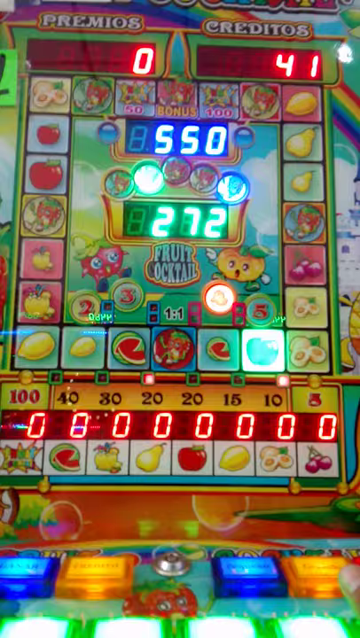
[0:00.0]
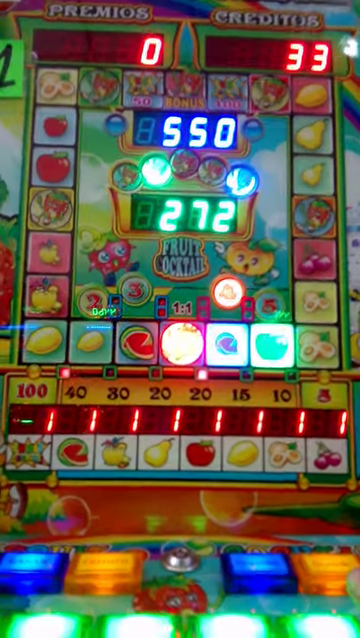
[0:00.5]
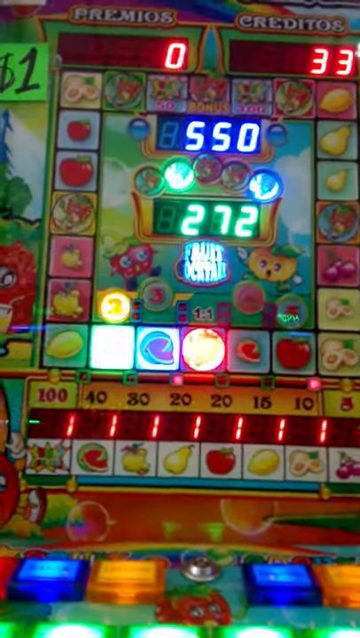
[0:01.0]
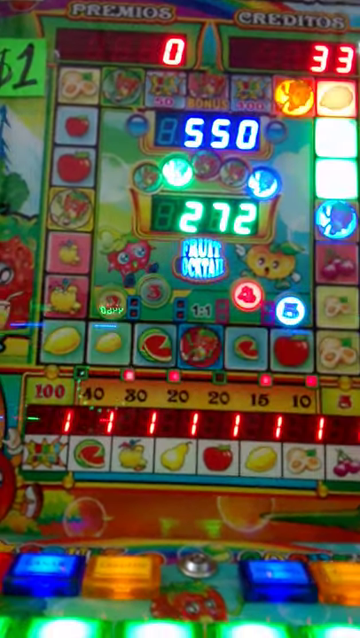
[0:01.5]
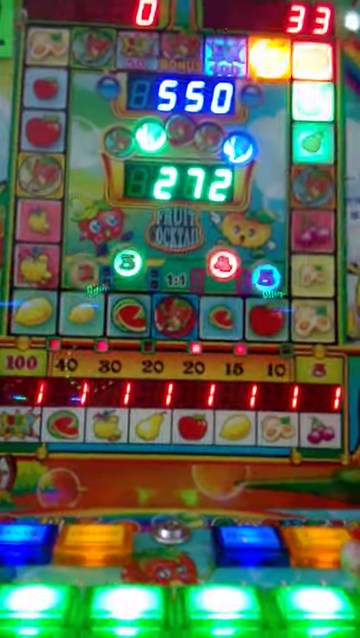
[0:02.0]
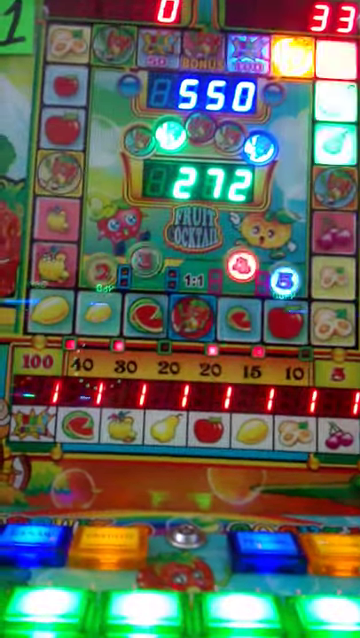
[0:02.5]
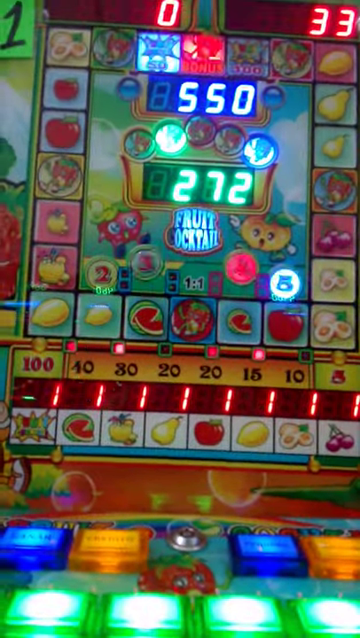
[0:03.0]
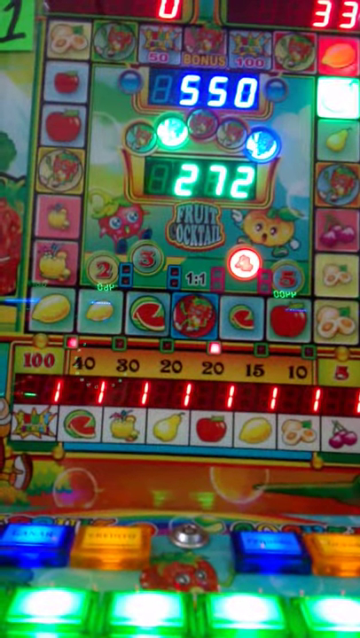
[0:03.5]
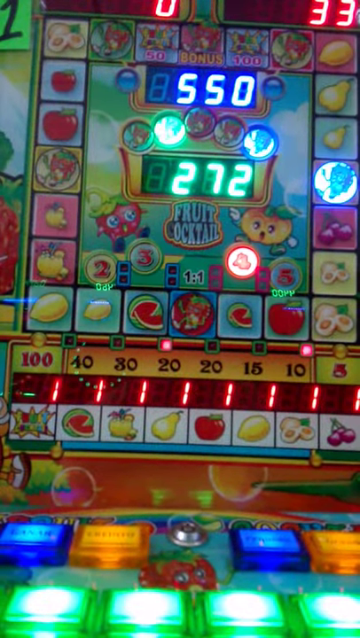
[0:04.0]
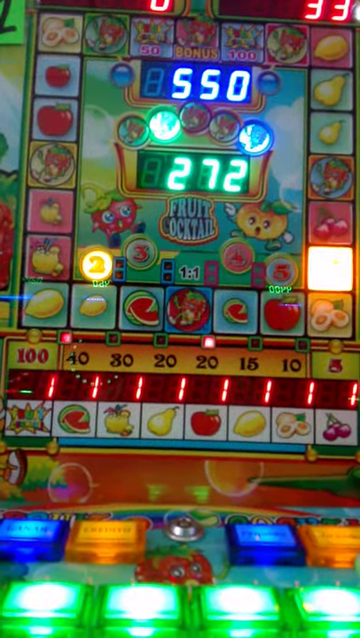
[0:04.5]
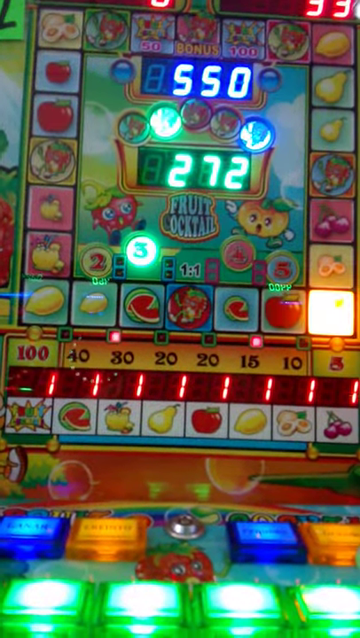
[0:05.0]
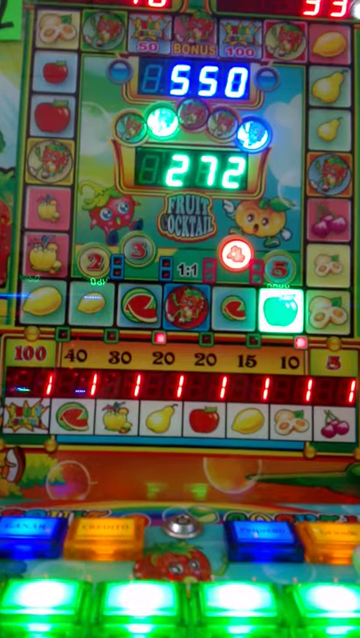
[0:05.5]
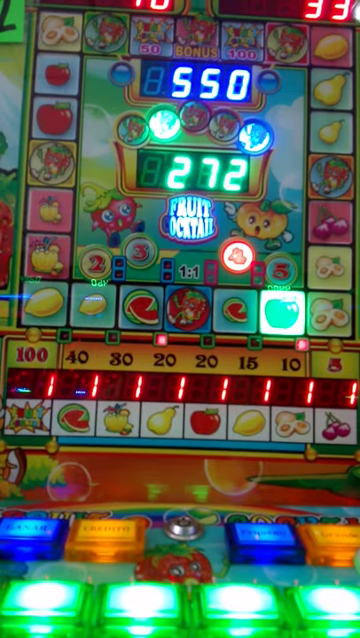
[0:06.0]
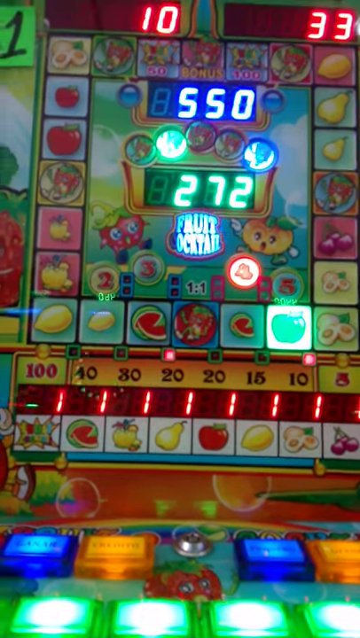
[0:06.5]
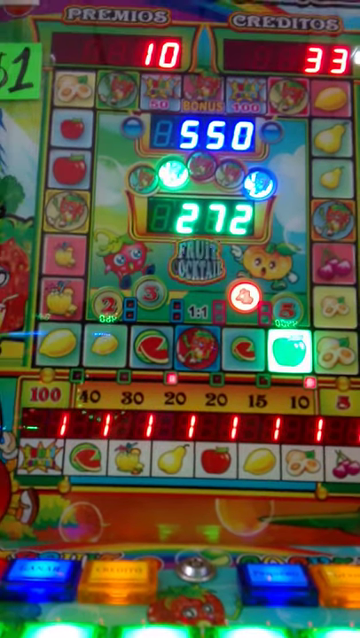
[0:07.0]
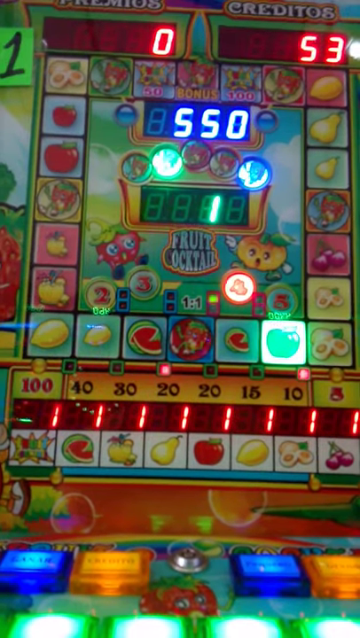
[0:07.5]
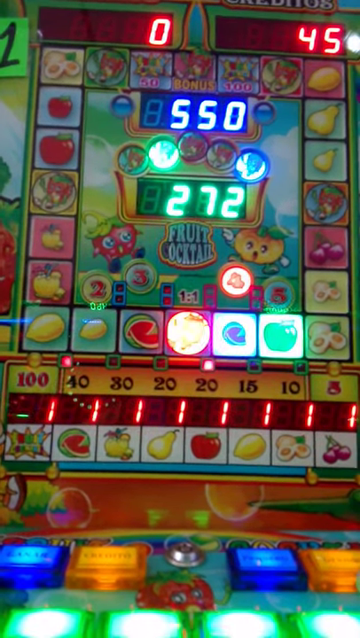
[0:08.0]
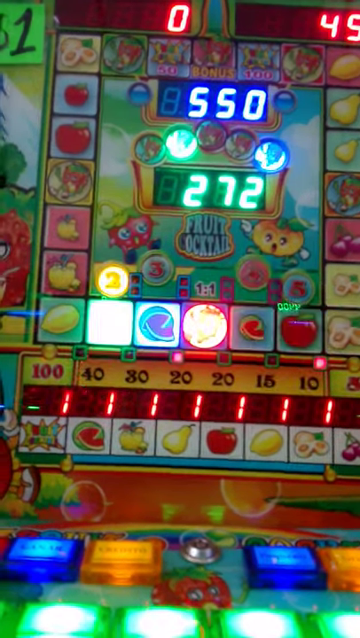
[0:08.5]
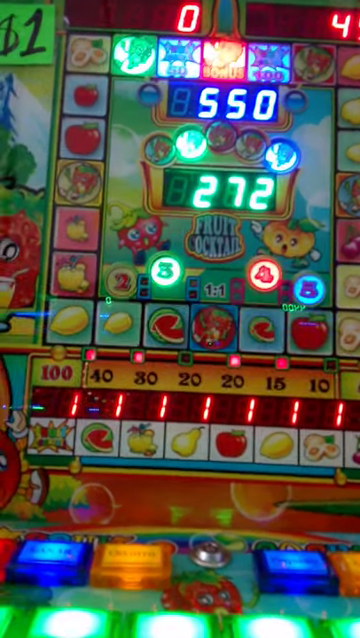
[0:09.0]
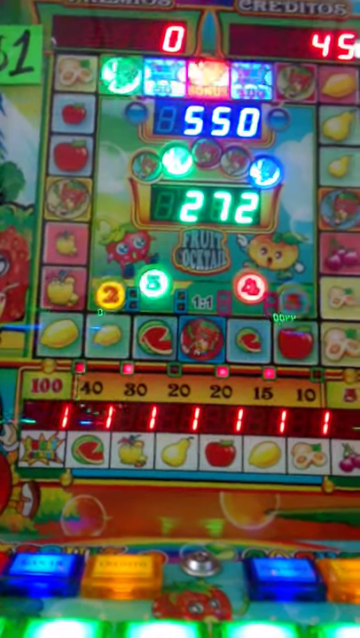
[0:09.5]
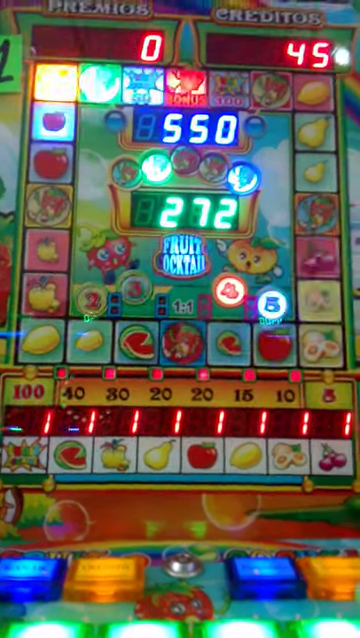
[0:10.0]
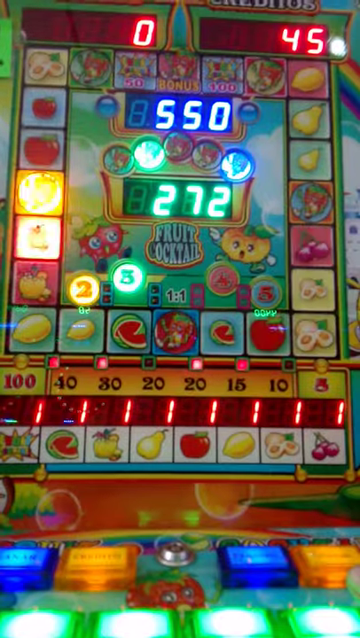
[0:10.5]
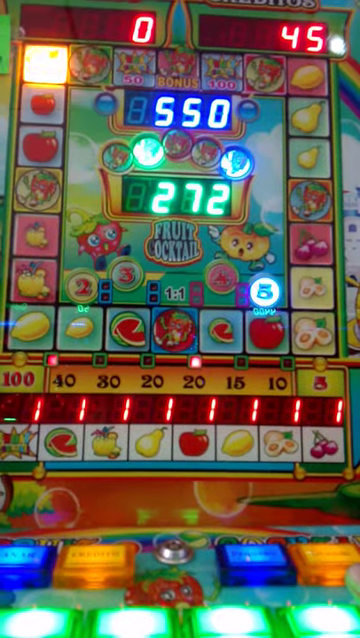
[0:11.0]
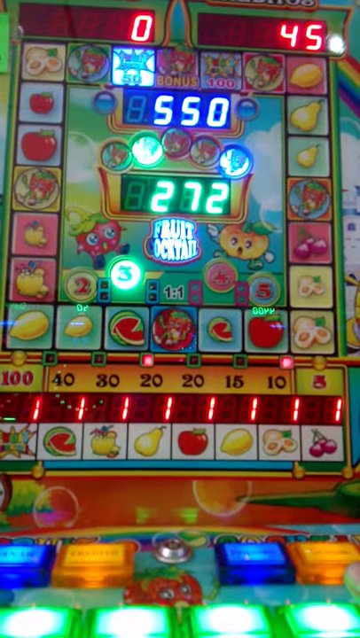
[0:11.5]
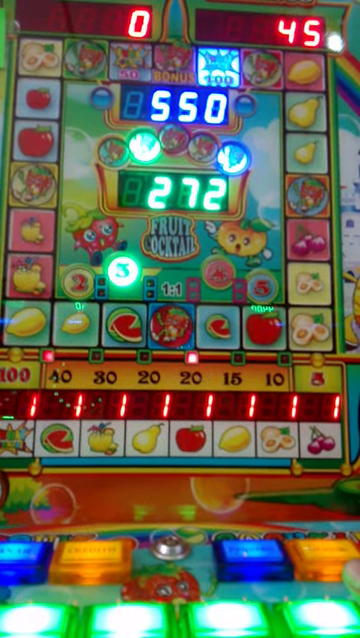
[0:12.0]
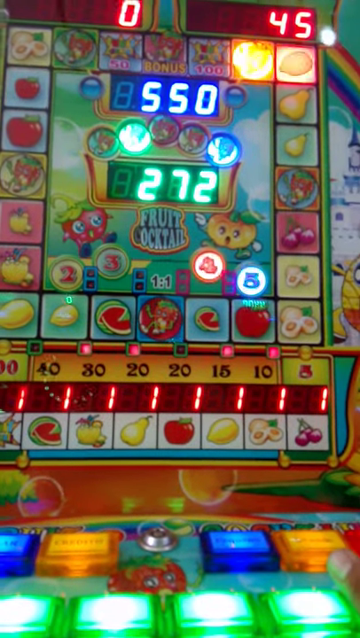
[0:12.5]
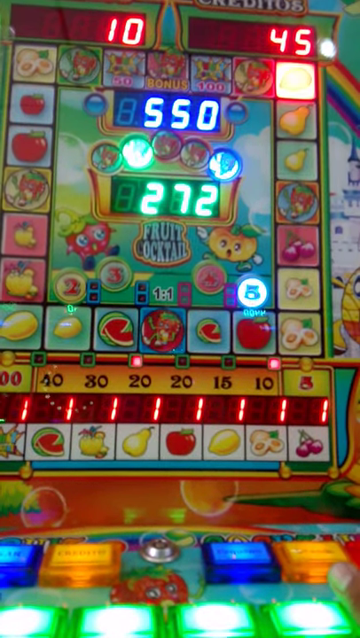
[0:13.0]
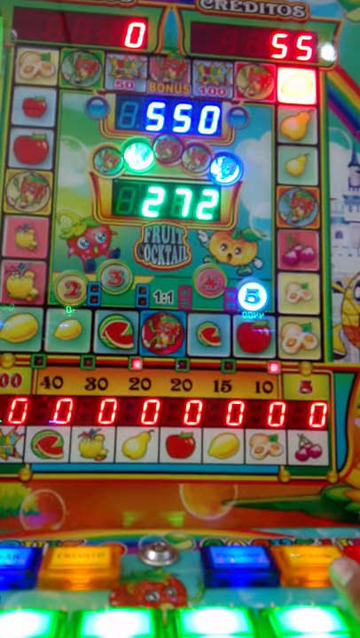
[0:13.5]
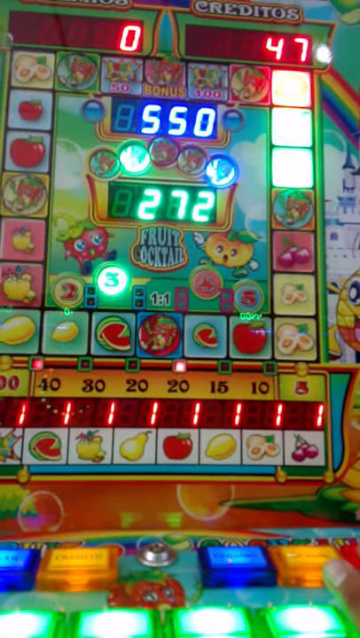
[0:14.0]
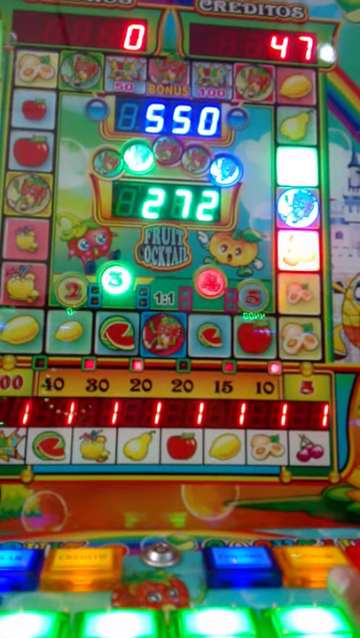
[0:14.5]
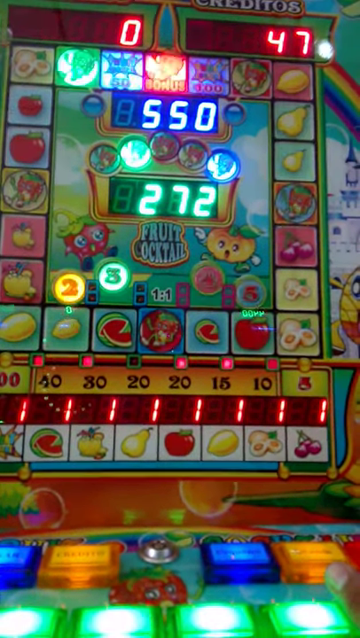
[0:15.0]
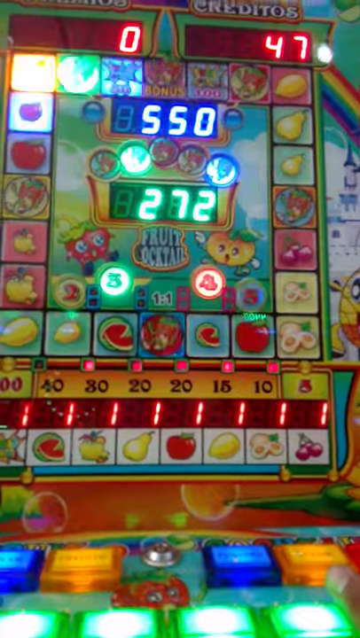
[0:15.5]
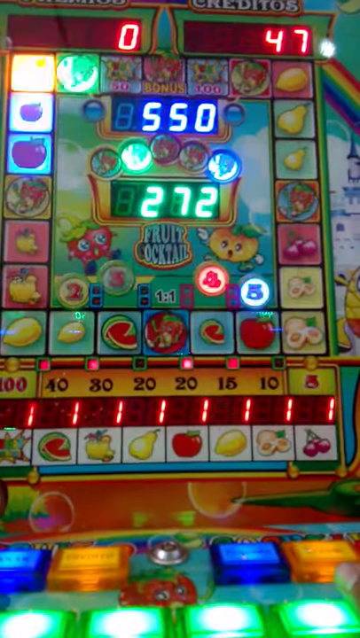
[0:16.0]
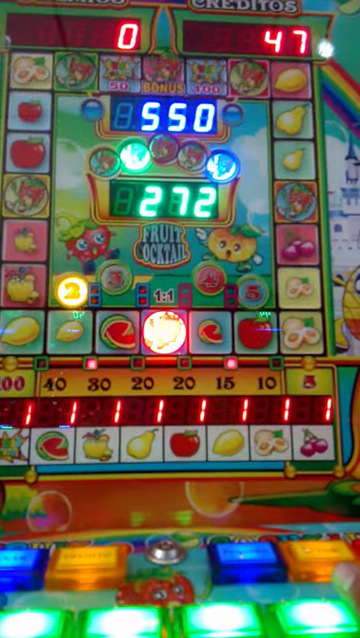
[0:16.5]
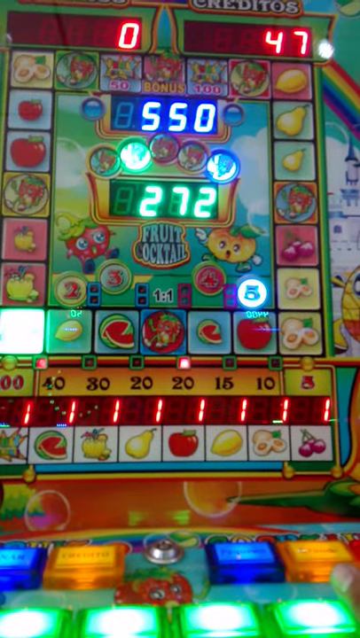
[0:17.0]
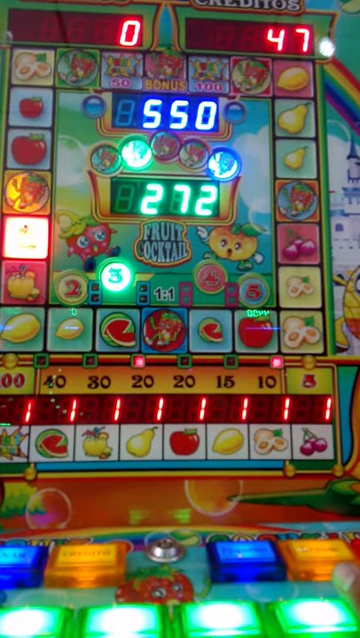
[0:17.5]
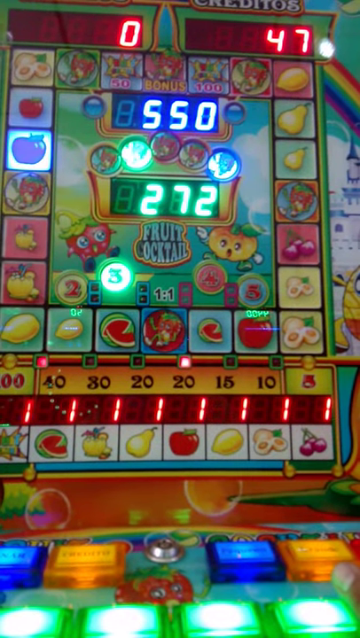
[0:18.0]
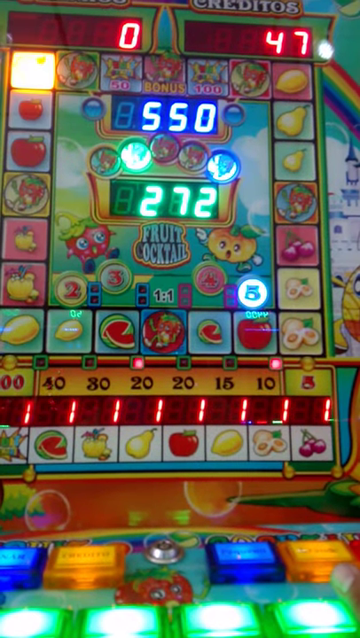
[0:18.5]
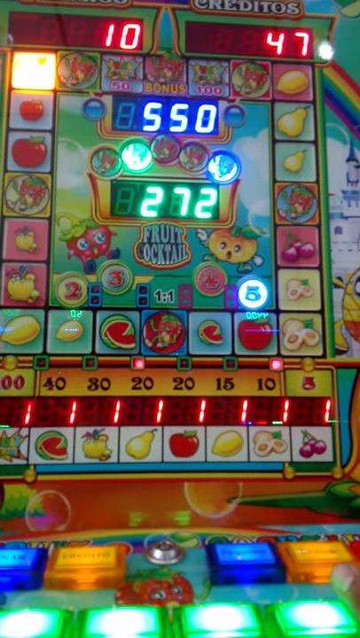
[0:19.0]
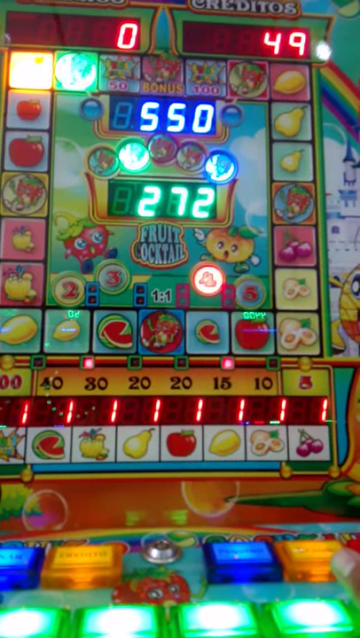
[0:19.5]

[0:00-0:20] A video slot machine game with a fruit theme appears, seemingly called Fruit Cocktail. A square board goes around the machine, and each square has a picture of a different fruit, such as apples, lemons, pears, watermelon and other fruit. A scoreboard is in the middle, along with what seem to be some kind of bonus multipliers. A light goes around the square board as the user waits to see which block it will land on. In the first round it lands on an apple and hits a multiplier in the middle, which hits the fruit cocktail light in the middle as well. The player has a total of 550 points with bonus points of 272, and 45 credits left after that spin. In another round, the light spins around the machine, slowly stops for a second on a yellow lemon in the right corner, keeps spinning quickly, stops for a second on another tan fruit in the top left corner, and then continues to go around slowly.